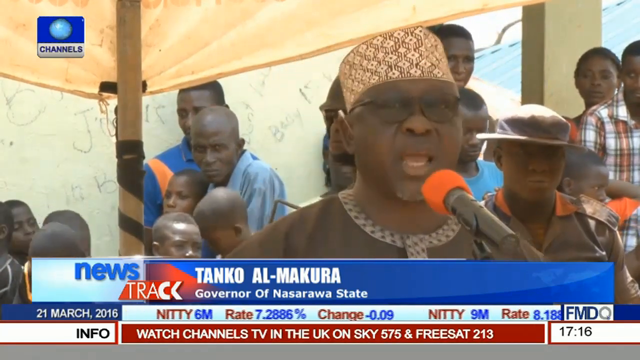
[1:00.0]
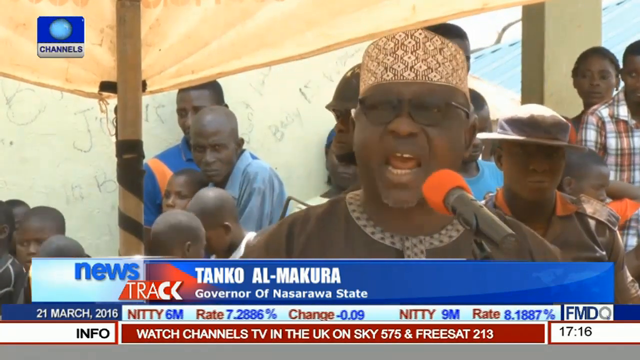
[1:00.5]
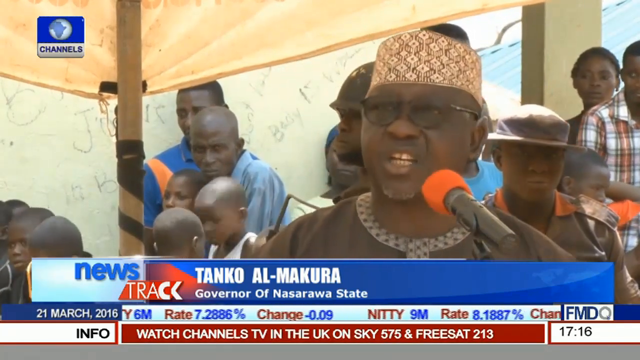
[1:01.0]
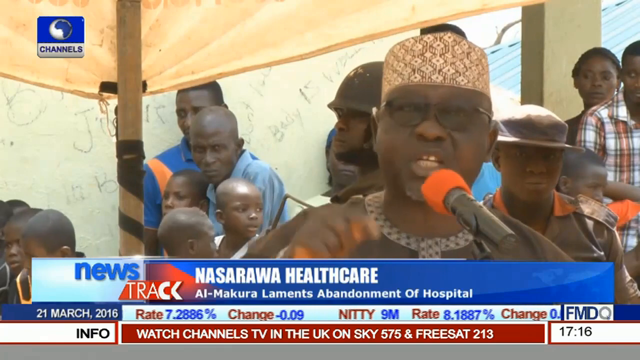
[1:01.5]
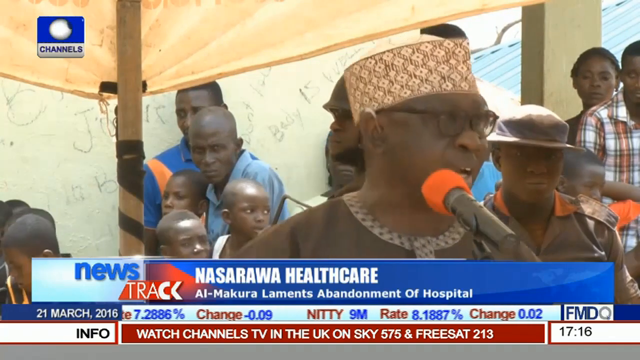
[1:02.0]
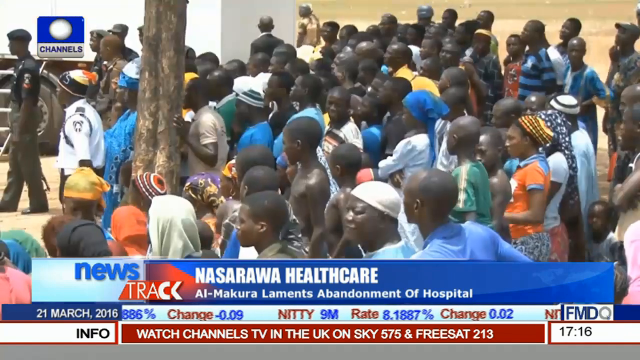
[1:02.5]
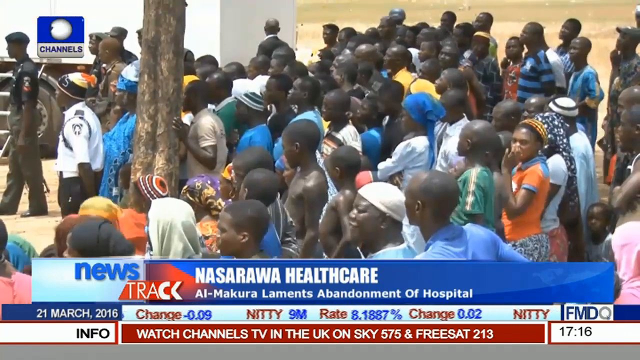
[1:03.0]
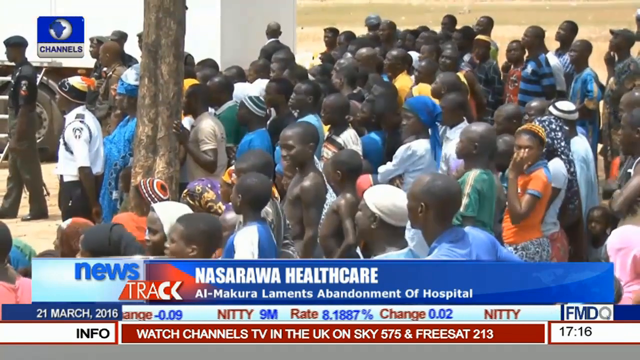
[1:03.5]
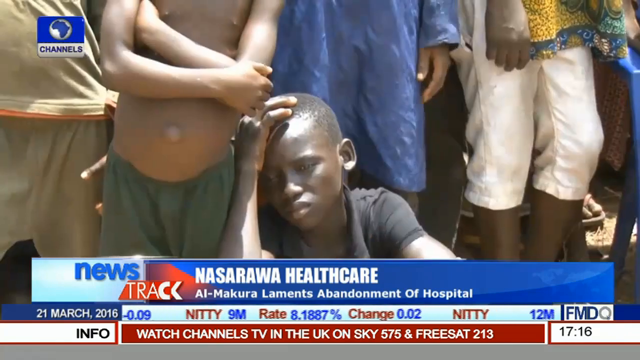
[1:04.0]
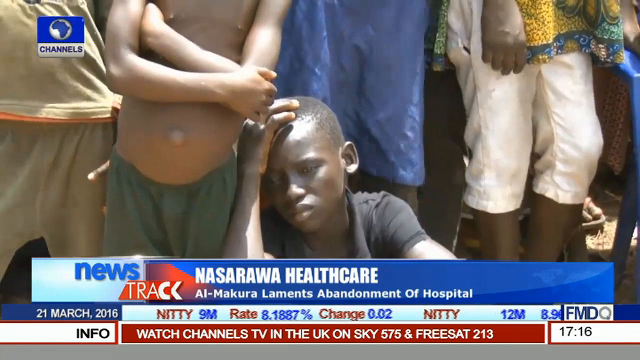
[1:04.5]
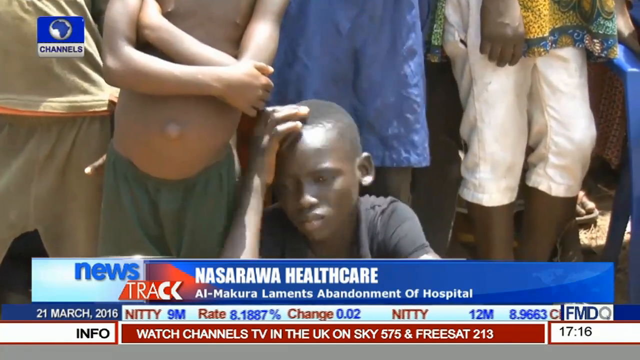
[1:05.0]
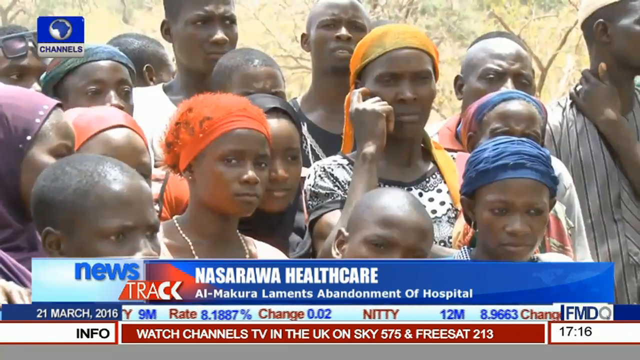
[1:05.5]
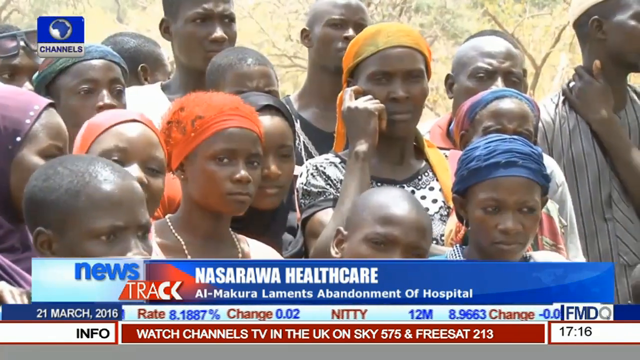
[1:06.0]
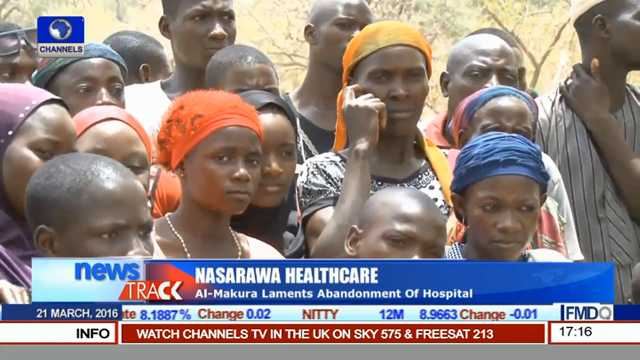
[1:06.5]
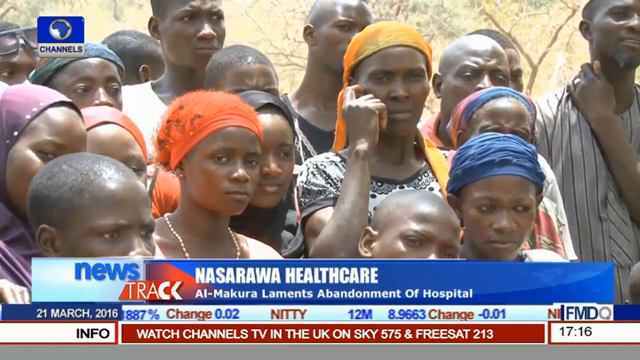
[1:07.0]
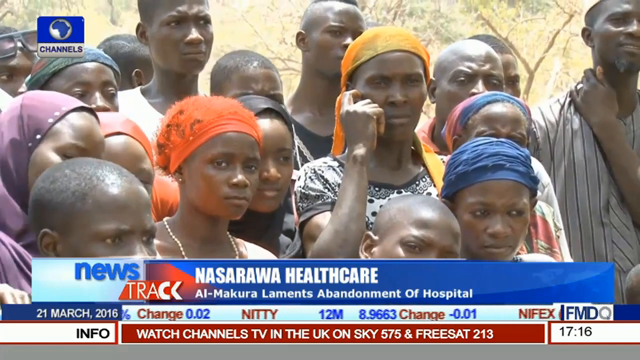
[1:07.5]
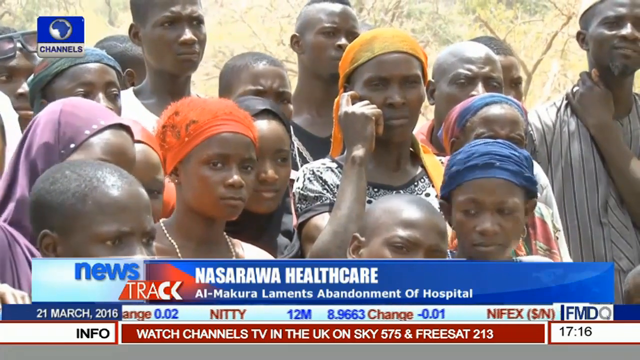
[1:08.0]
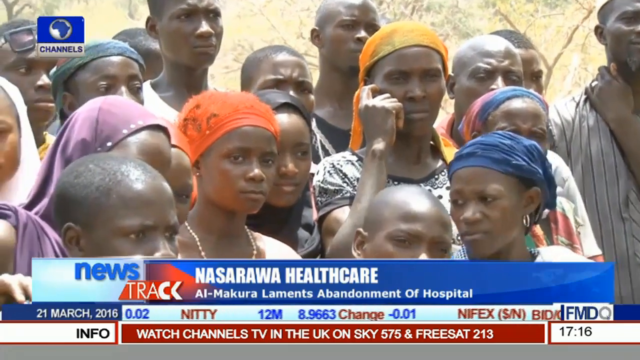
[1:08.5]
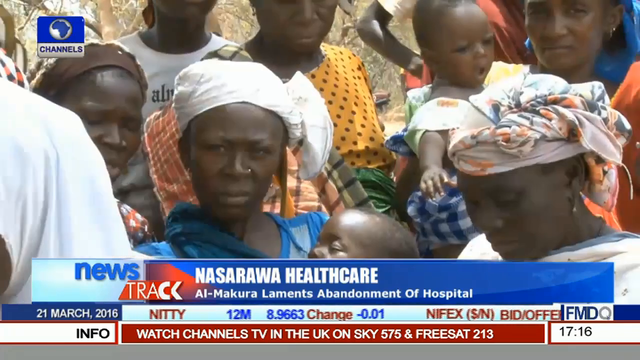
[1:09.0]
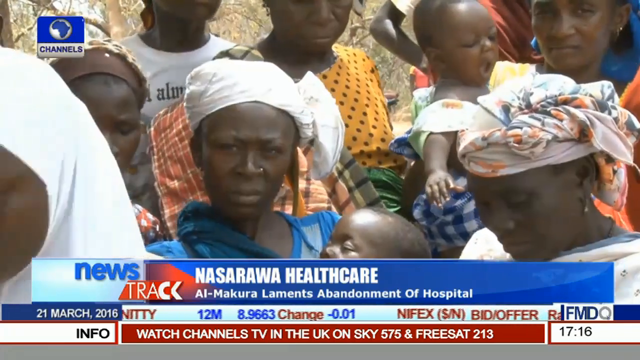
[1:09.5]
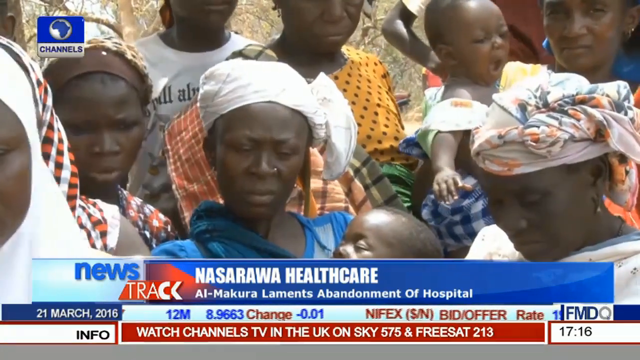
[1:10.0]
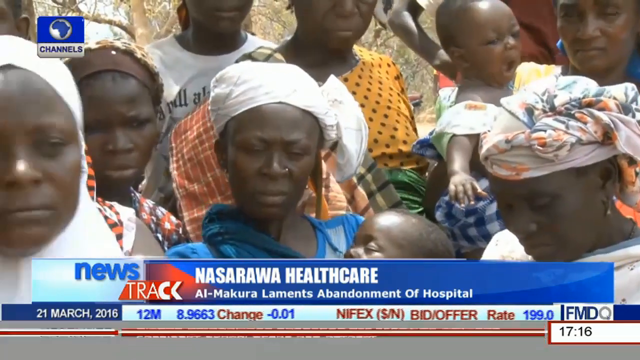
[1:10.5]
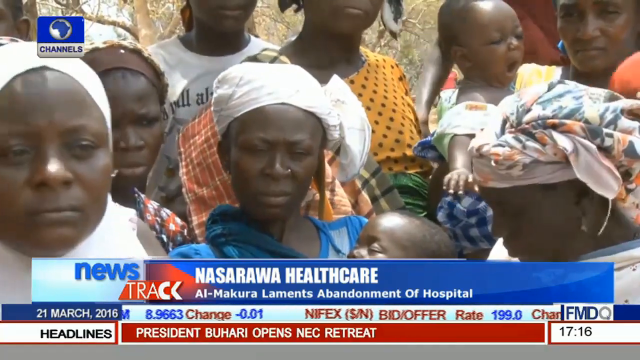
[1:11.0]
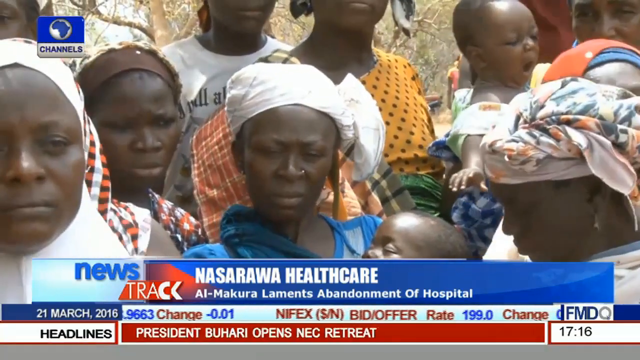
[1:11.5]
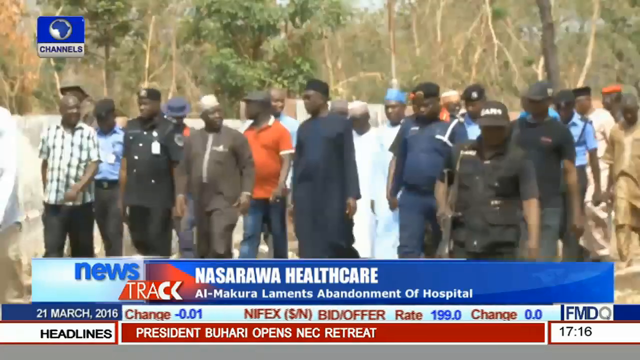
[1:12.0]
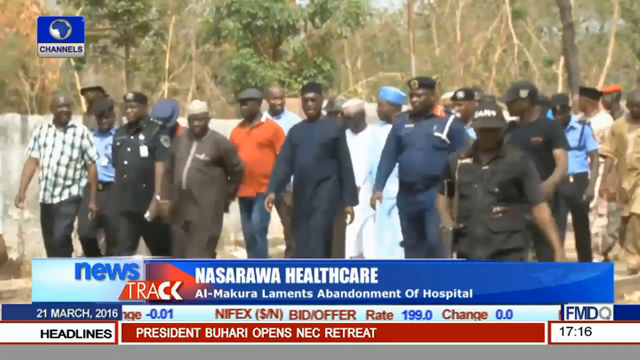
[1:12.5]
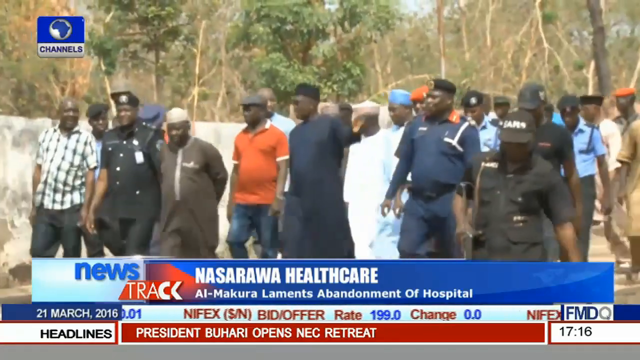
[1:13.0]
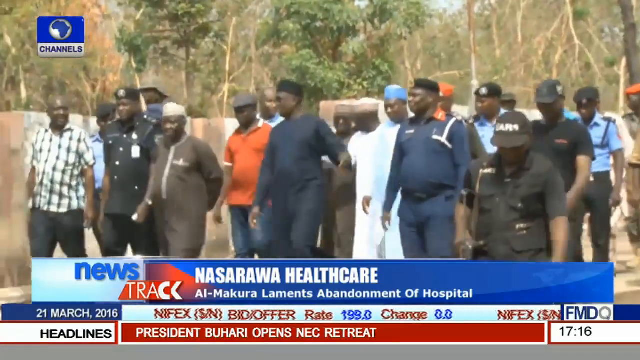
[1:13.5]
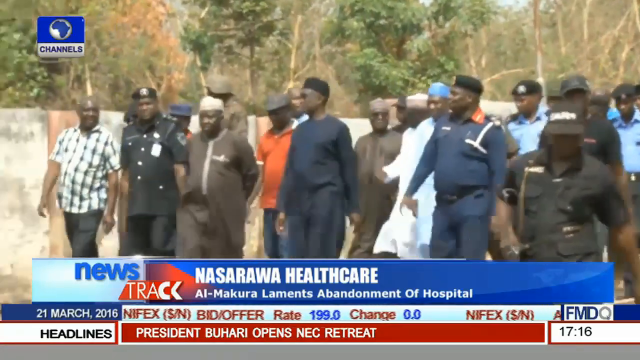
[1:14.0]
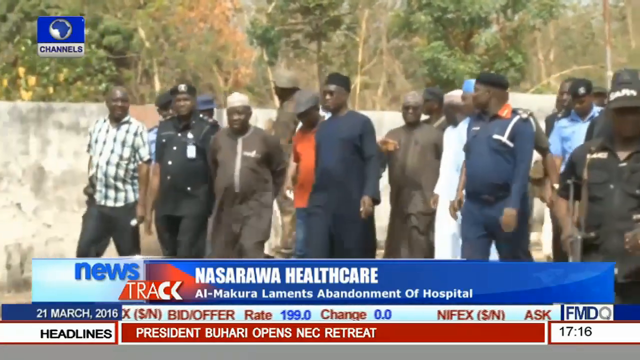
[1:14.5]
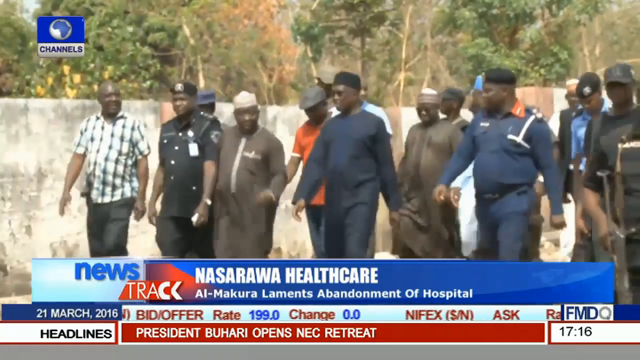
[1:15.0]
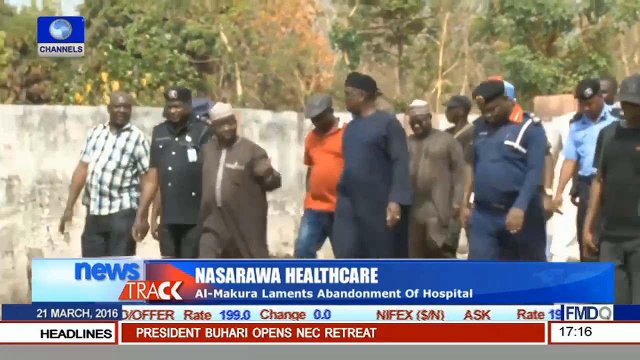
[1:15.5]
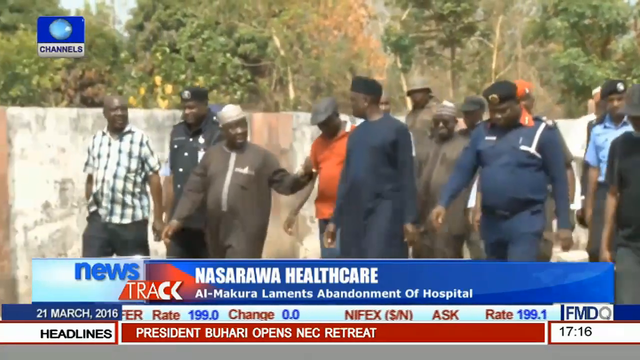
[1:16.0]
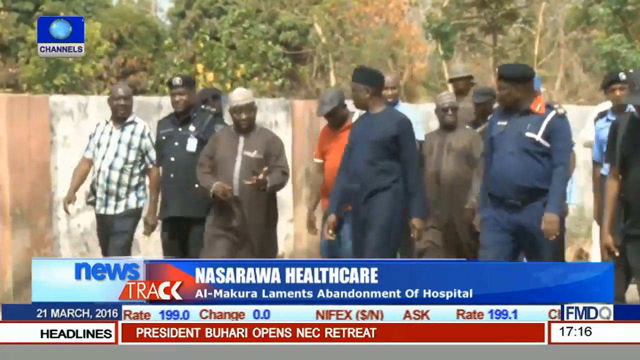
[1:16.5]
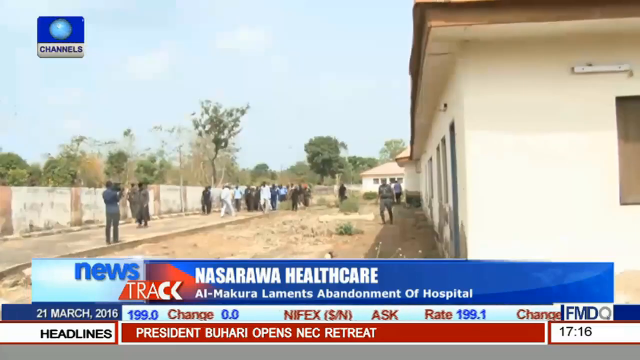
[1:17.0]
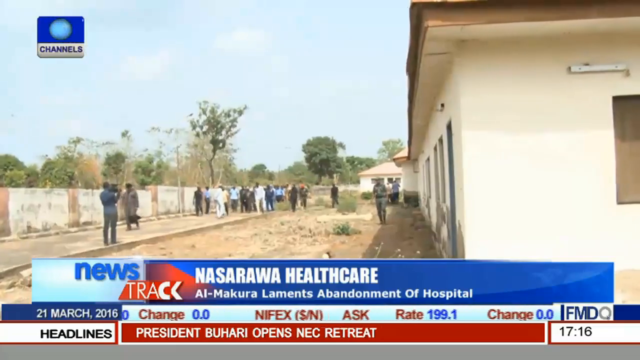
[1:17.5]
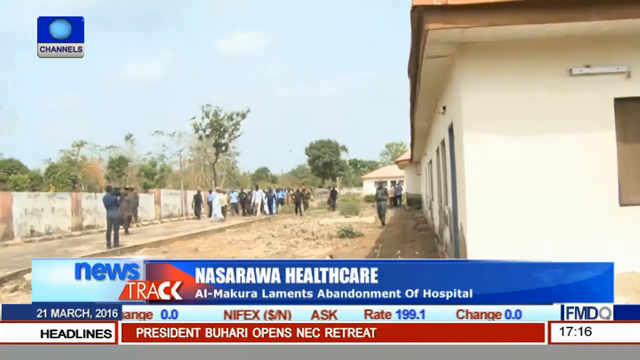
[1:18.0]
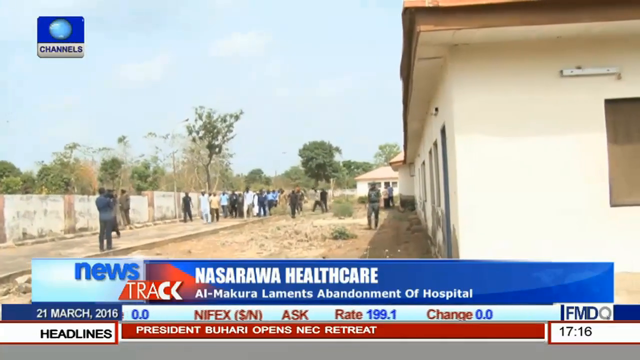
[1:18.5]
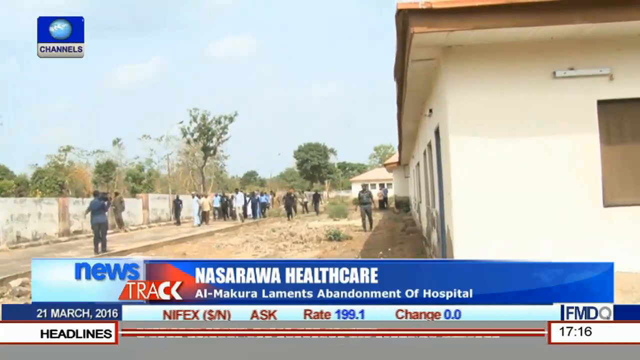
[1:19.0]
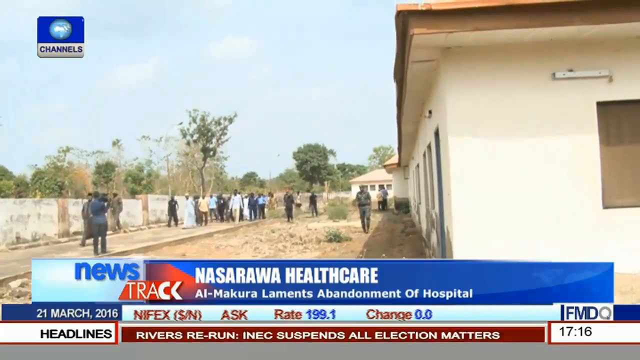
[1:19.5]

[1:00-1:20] A man wearing a hat with a diamond shape on it speaks into an orange microphone while people behind him look on and watch his speech. He raises his right hand and gestures, kind of pointing and shaking it. Various people watch, all facing the same direction, in different clothes, including some who appear to be wearing some kind of uniforms. A child sits on the ground with their right hand on their head. The video cuts to more people gathered together, watching from a different angle, and then another group in which some are holding children. A group of men in various clothes and hats walks together; one gestures with his arm to the left and another is also speaking. A wide-angle shot shows the same group continuing to walk down a road. Text at the bottom of the screen refers to the abandonment of a hospital.